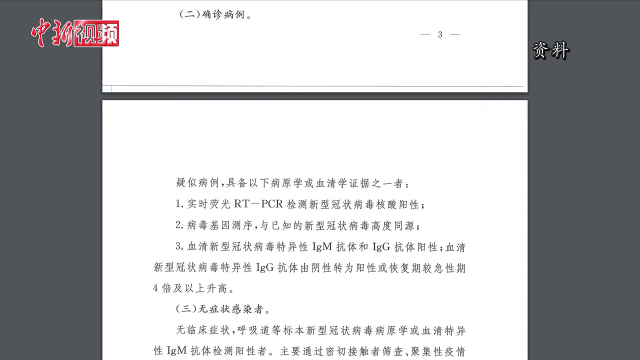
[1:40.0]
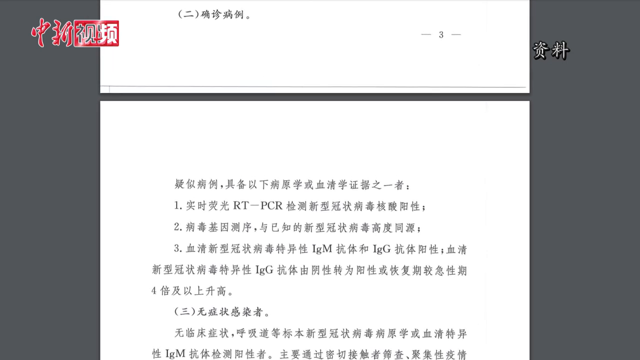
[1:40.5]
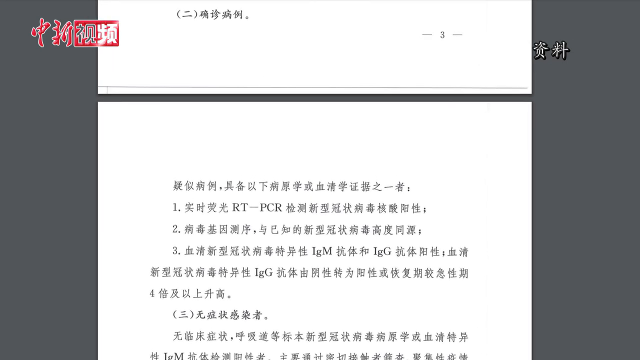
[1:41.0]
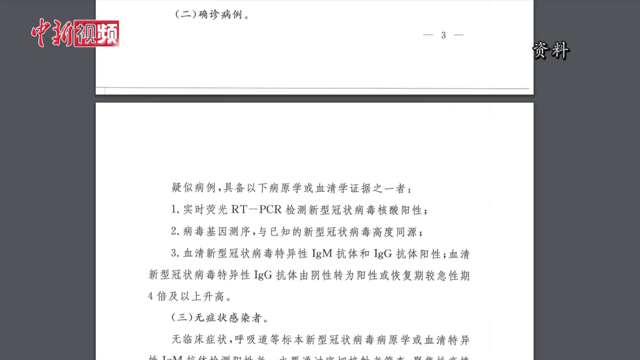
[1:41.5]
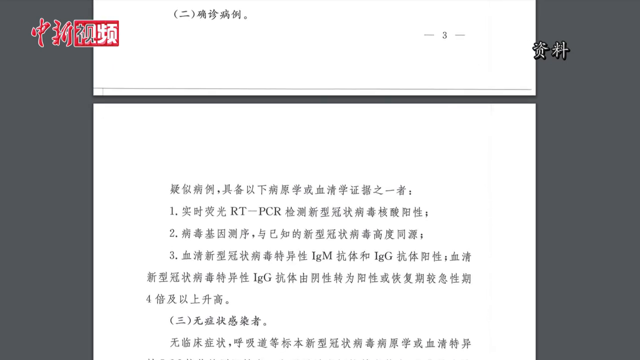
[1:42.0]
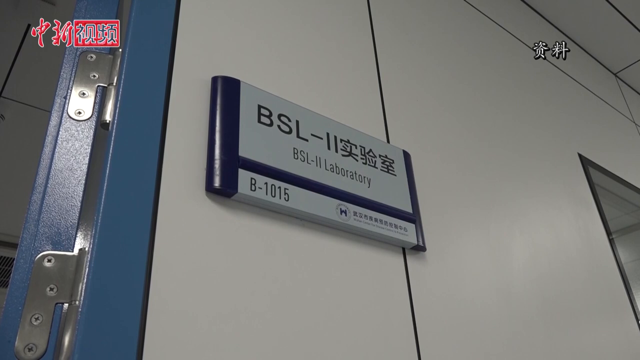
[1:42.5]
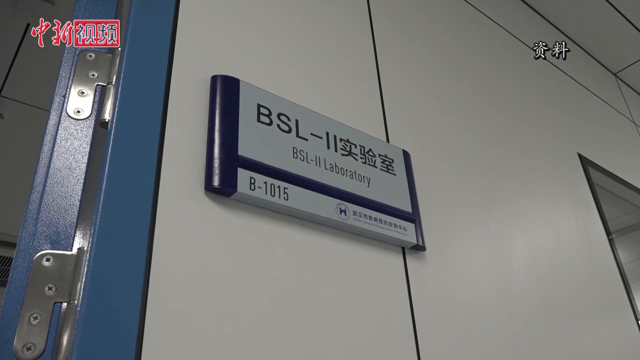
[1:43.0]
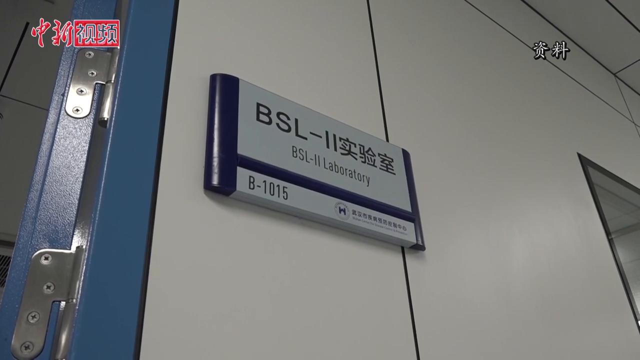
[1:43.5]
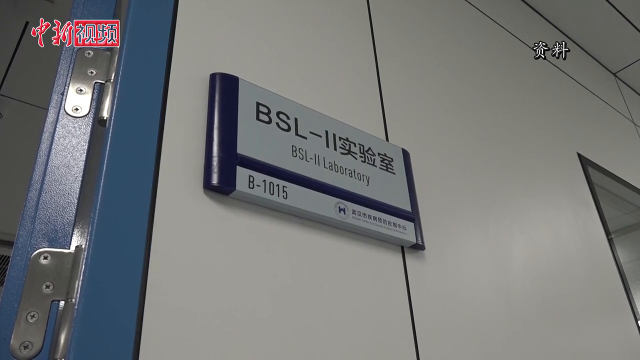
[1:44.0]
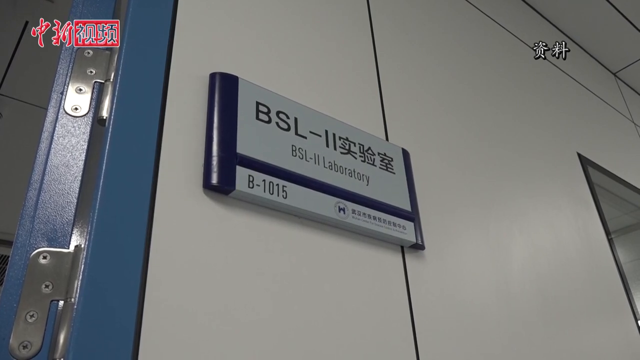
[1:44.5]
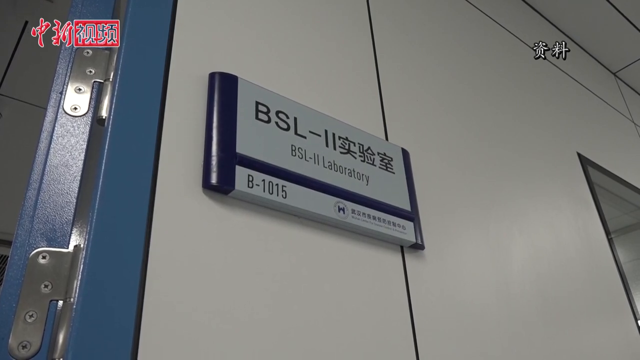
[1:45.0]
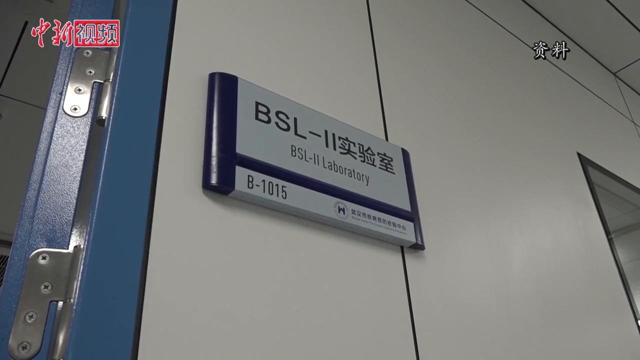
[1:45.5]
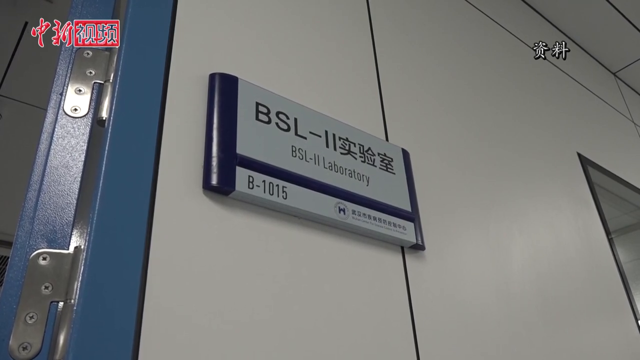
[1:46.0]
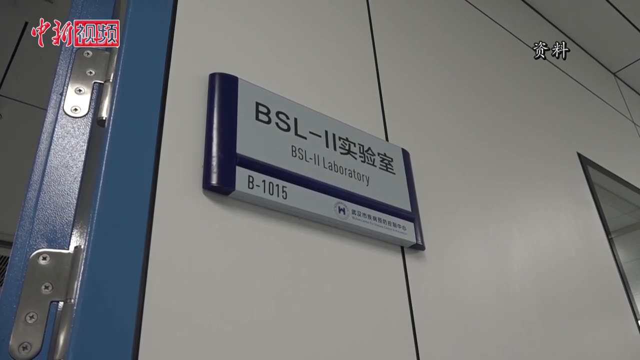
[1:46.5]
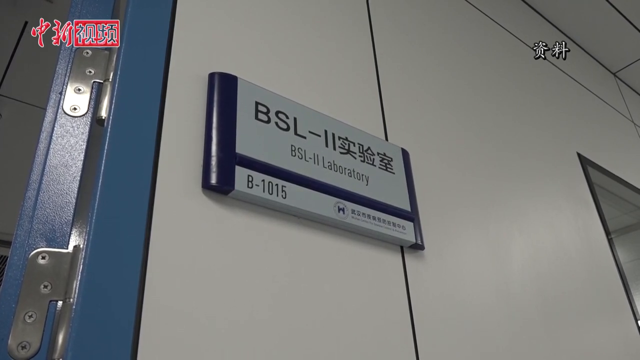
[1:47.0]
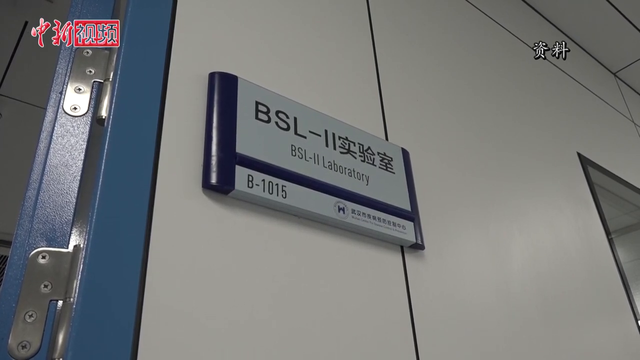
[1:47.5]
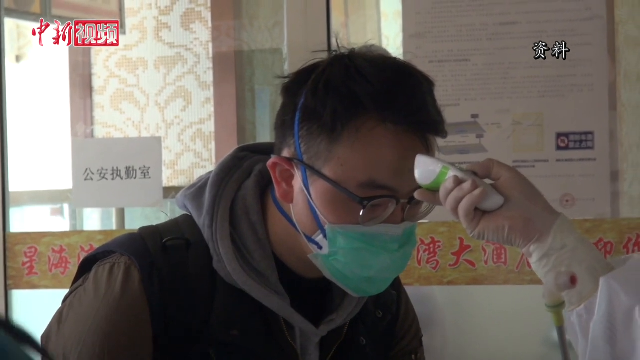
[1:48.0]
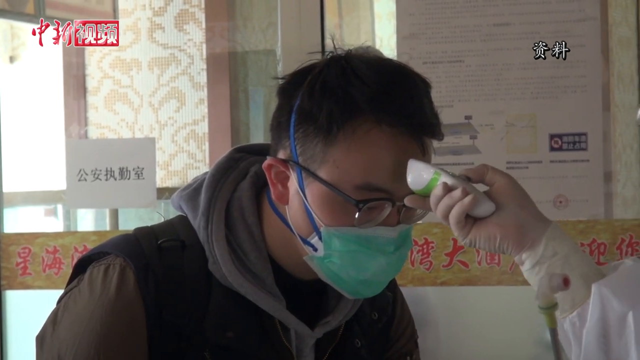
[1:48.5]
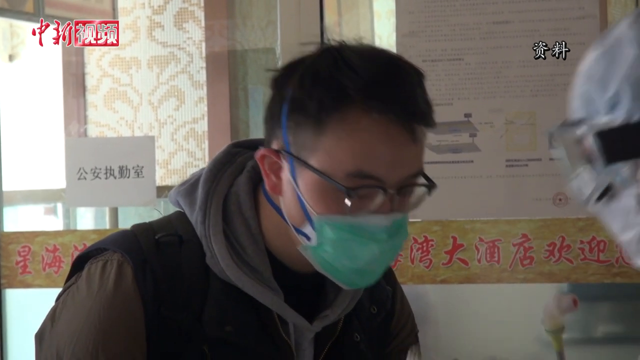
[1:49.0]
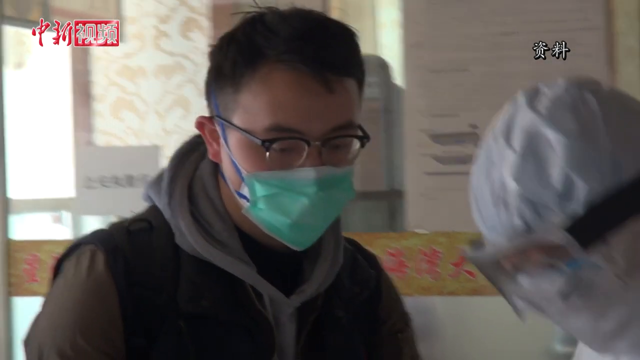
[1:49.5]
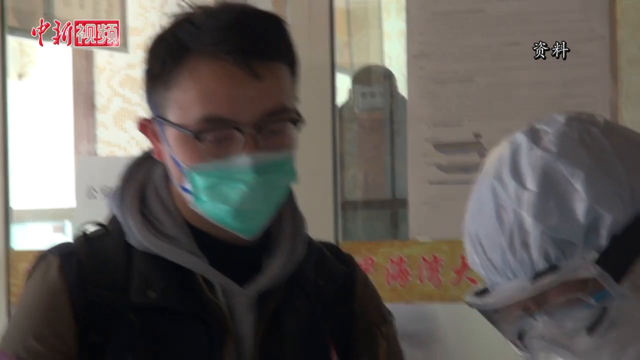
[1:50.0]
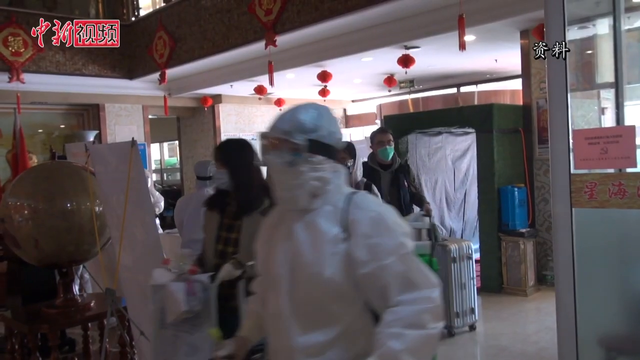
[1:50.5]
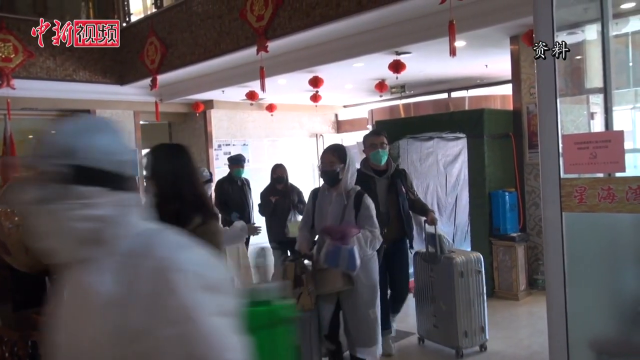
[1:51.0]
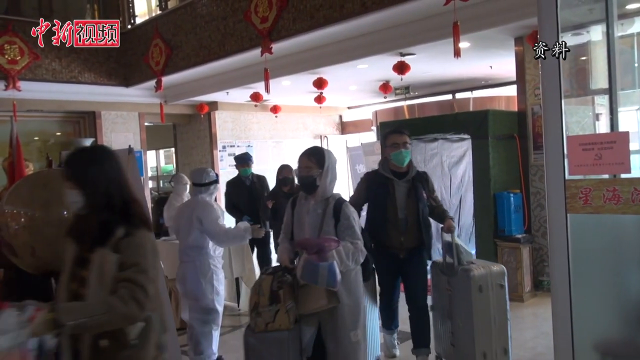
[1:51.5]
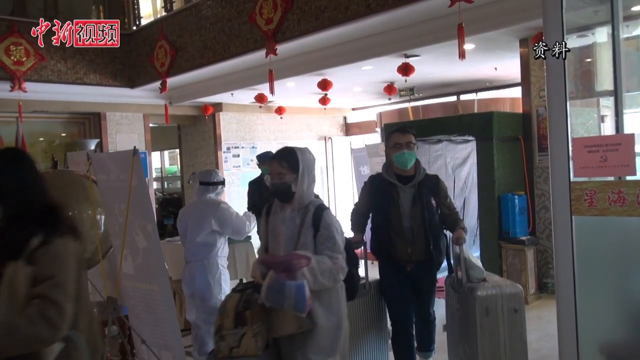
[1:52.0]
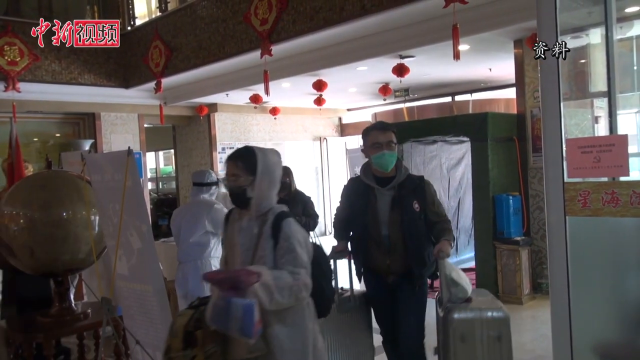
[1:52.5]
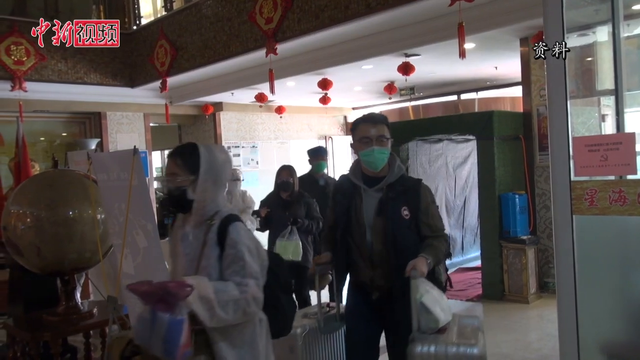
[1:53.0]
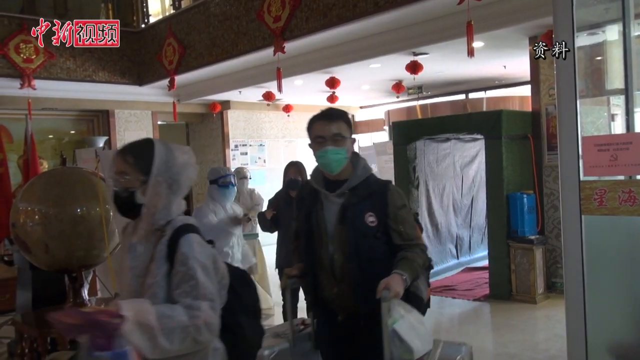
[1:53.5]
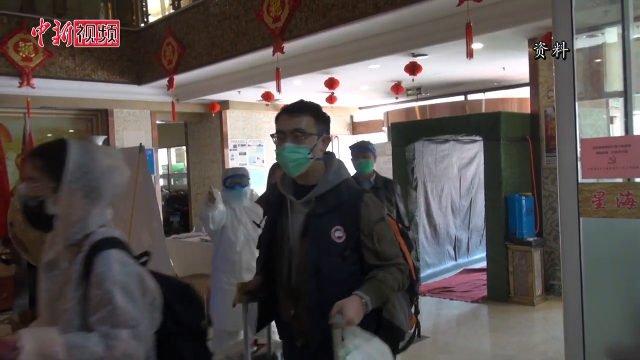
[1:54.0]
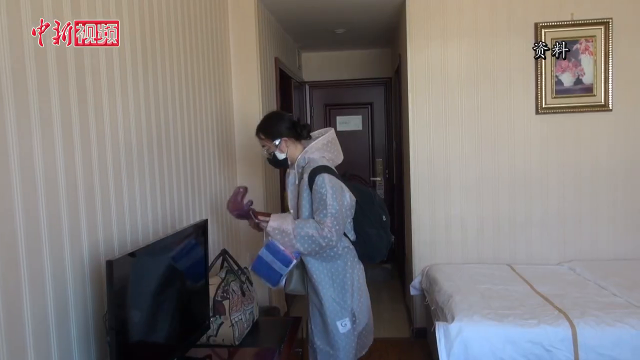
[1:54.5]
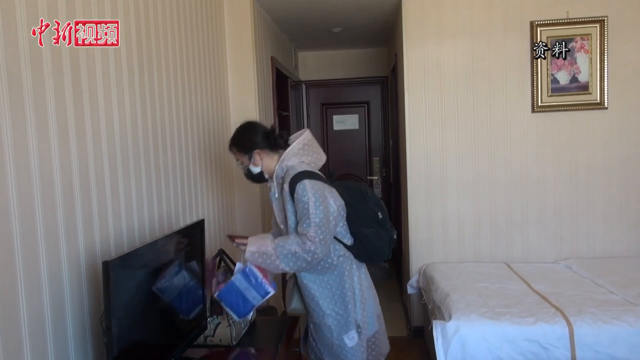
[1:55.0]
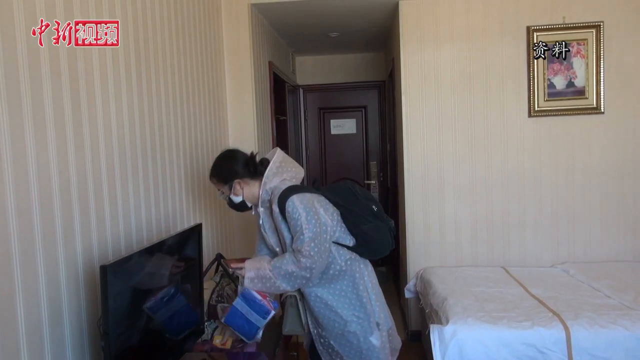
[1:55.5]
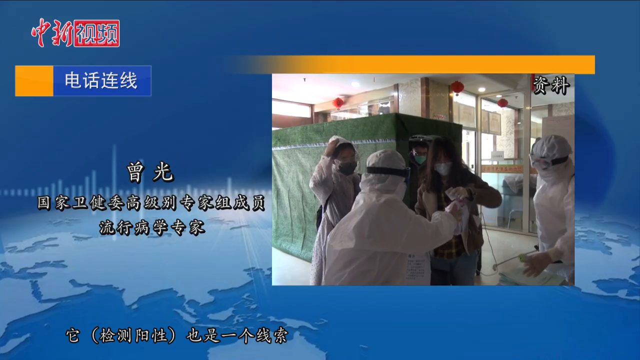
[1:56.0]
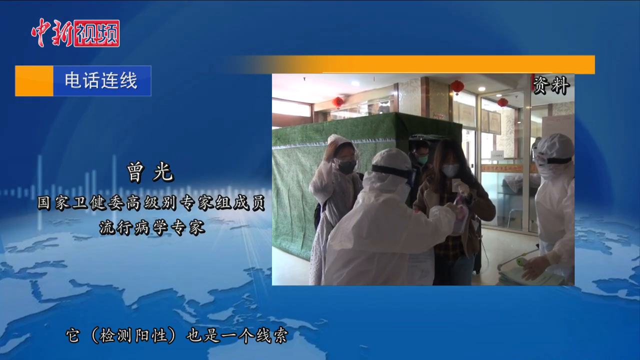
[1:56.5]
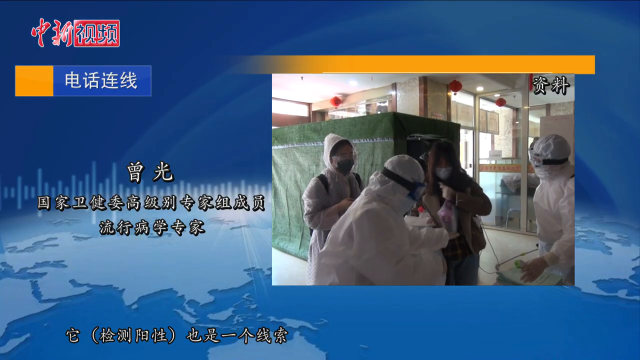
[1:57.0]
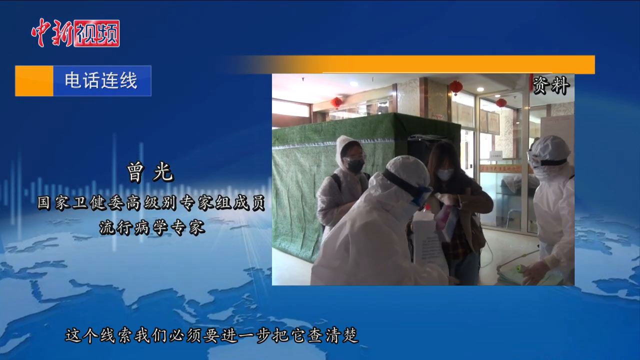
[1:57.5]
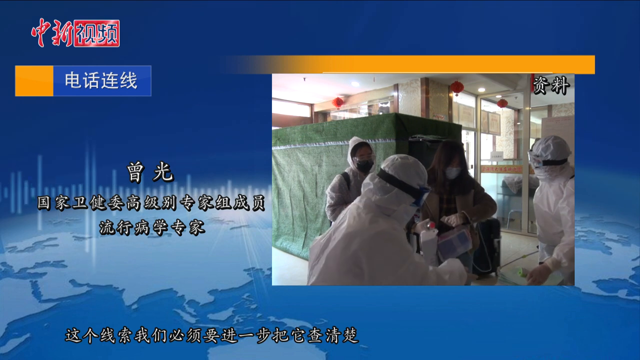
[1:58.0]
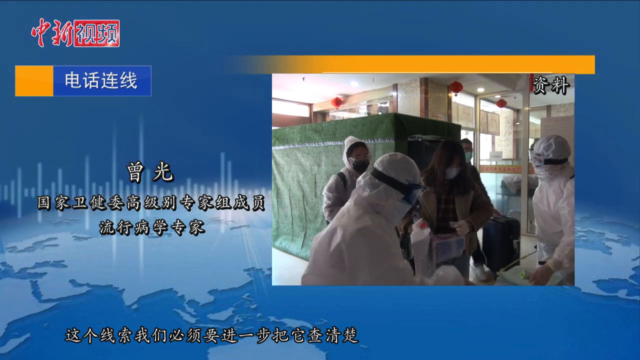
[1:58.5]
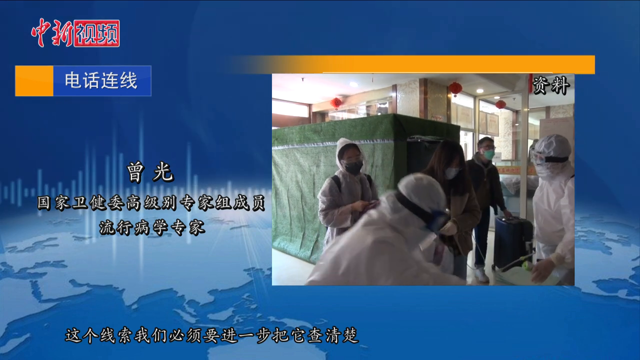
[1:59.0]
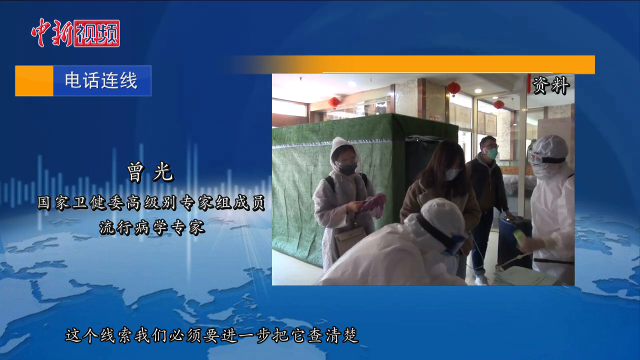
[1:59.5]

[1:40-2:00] A sign outside a lab door reads "BSL-2 Laboratory B1015". Next, a man wearing just a mask gets his temperature checked. Later he walks into a place with a whole entry system that looks like a sanitation booth for a hazmat situation. It then looks like the inside of a hotel, as everybody carries in luggage, and the people go into a hotel room. There still seem to be people in hazmat suits as well as travelers.